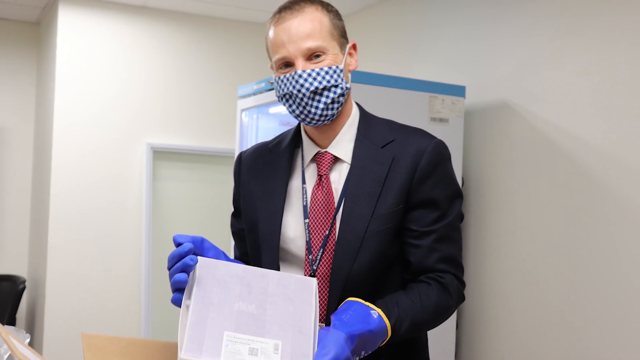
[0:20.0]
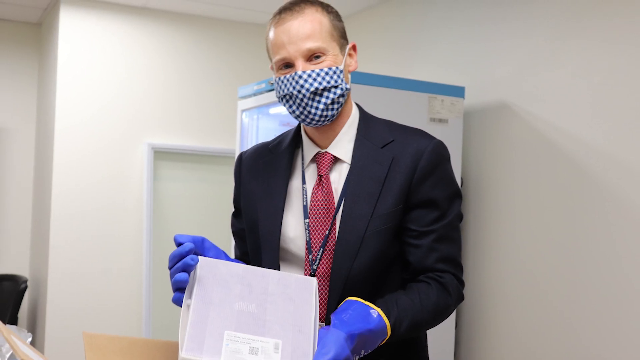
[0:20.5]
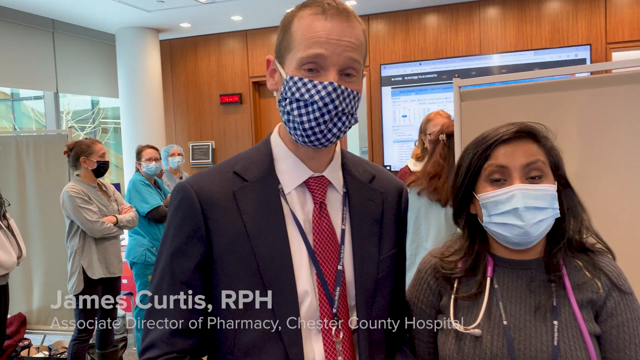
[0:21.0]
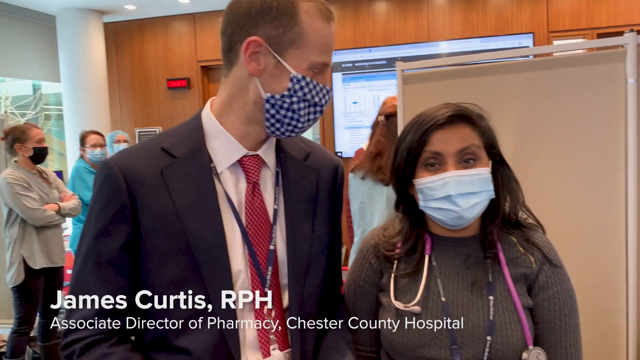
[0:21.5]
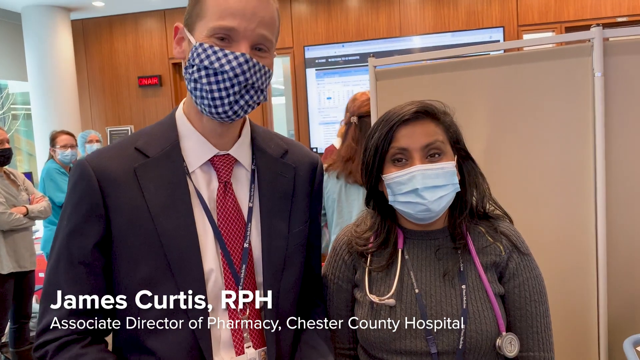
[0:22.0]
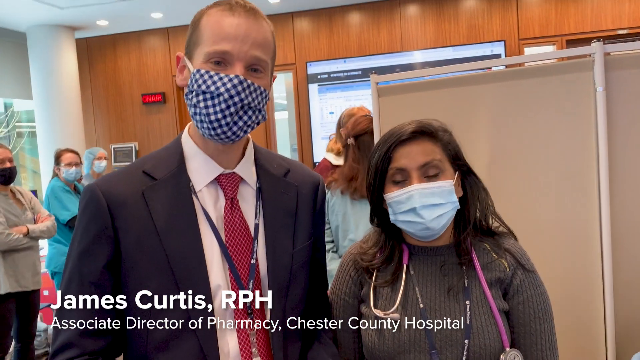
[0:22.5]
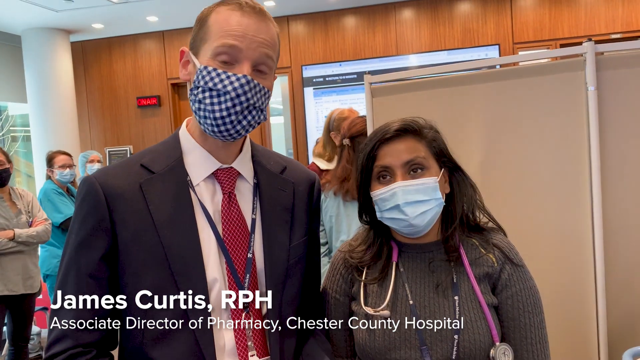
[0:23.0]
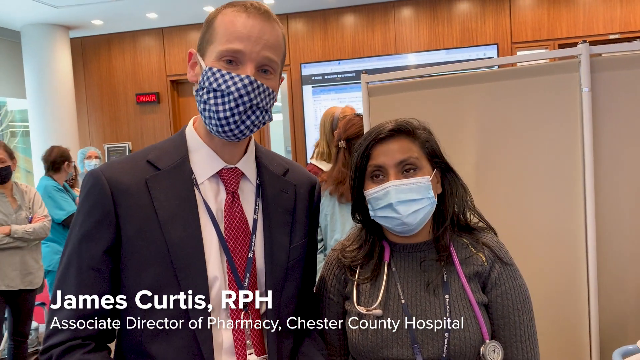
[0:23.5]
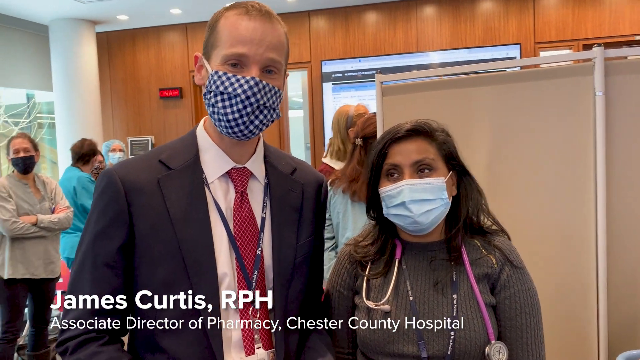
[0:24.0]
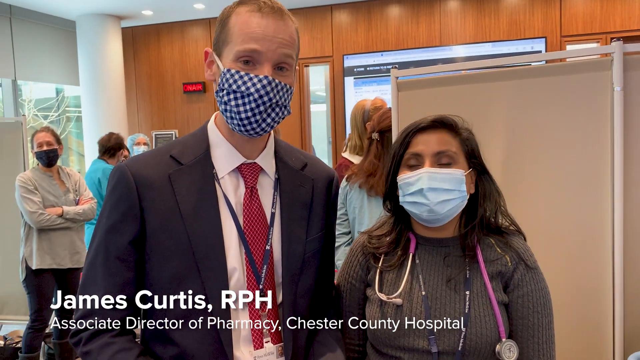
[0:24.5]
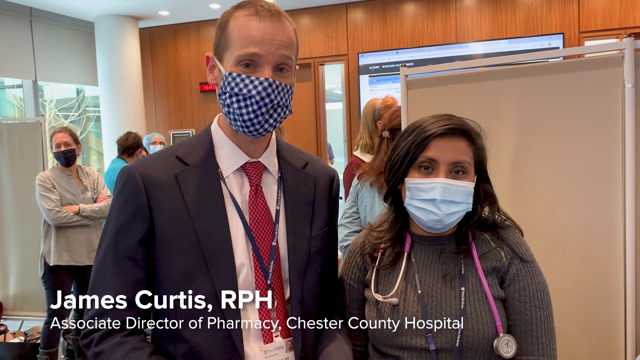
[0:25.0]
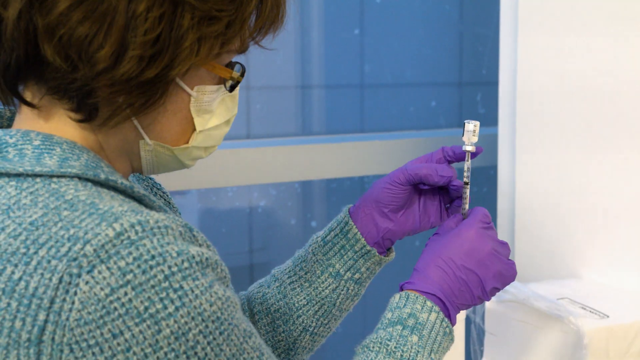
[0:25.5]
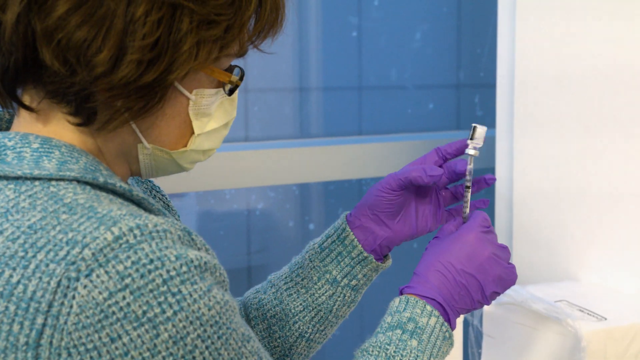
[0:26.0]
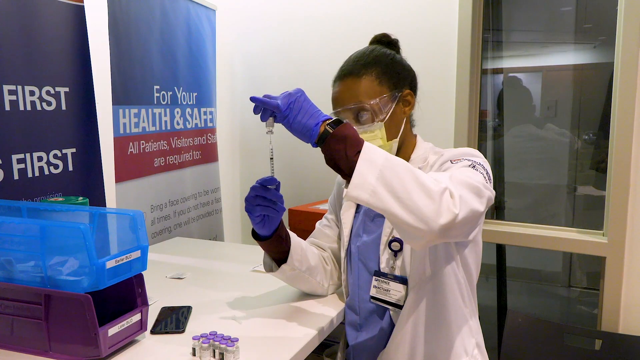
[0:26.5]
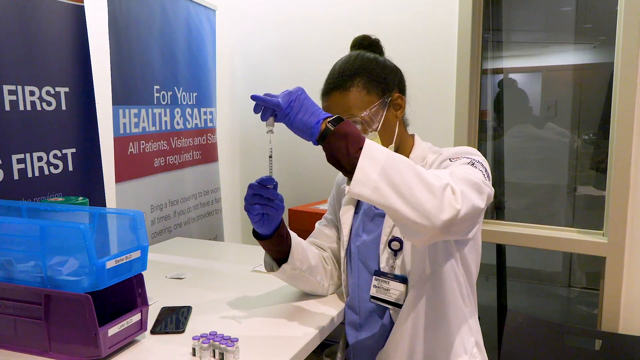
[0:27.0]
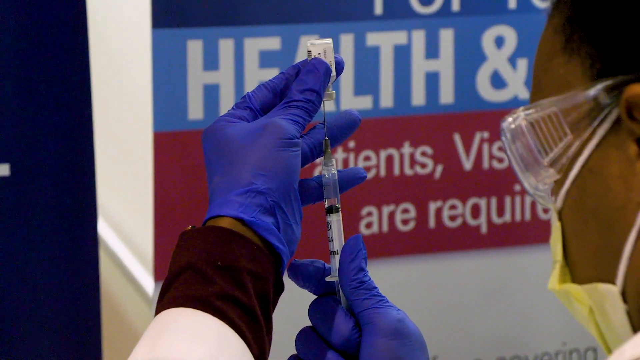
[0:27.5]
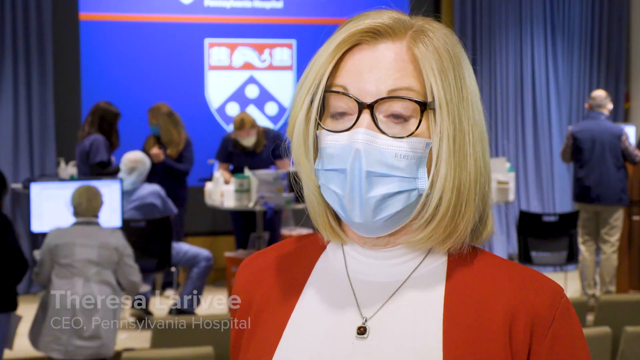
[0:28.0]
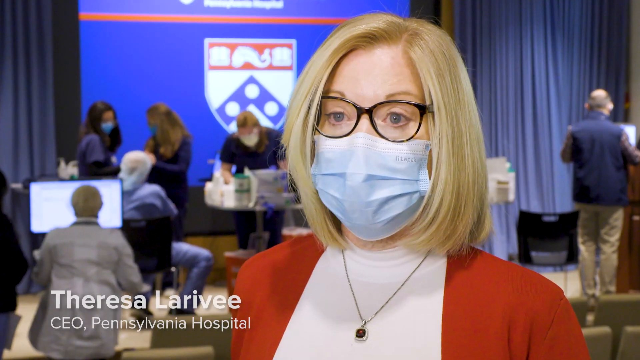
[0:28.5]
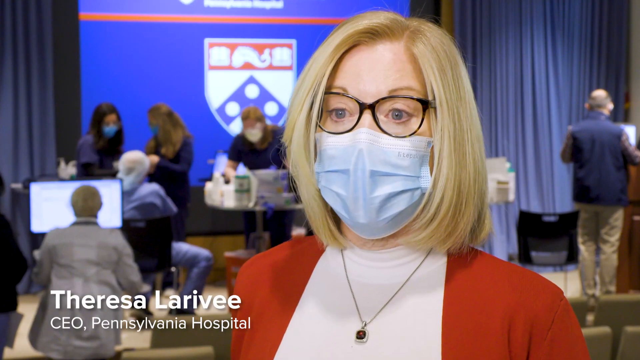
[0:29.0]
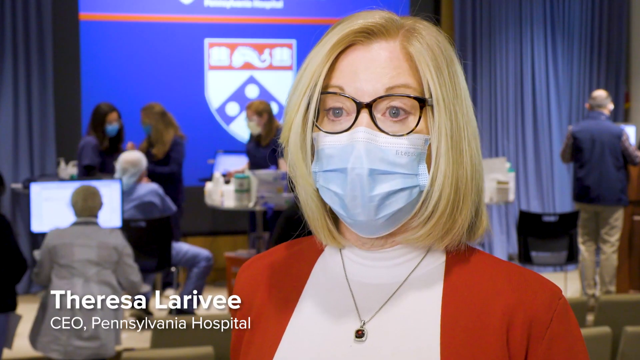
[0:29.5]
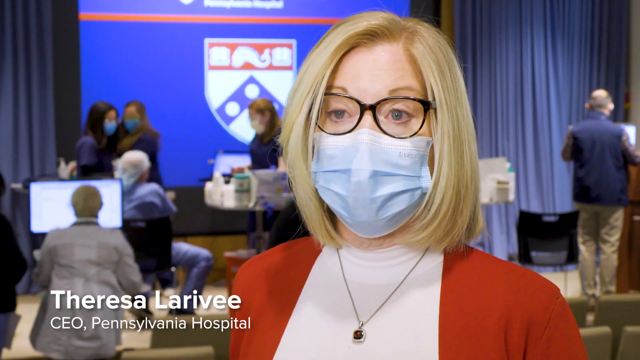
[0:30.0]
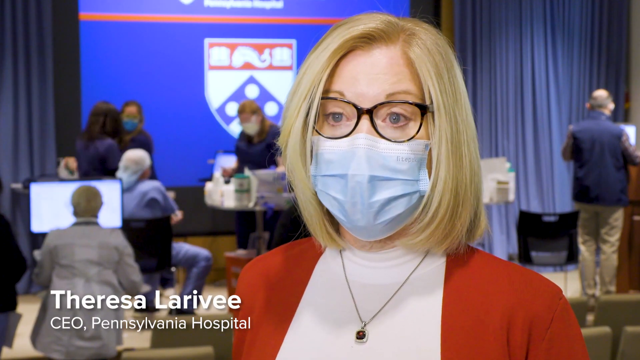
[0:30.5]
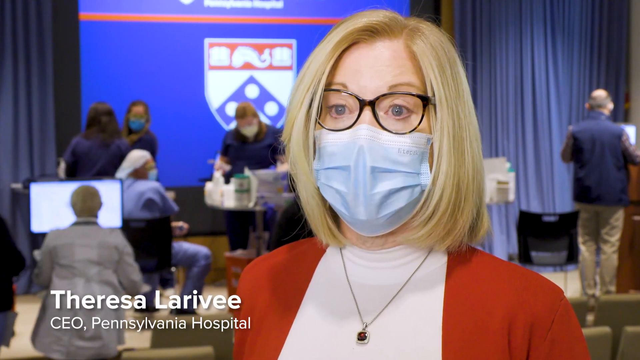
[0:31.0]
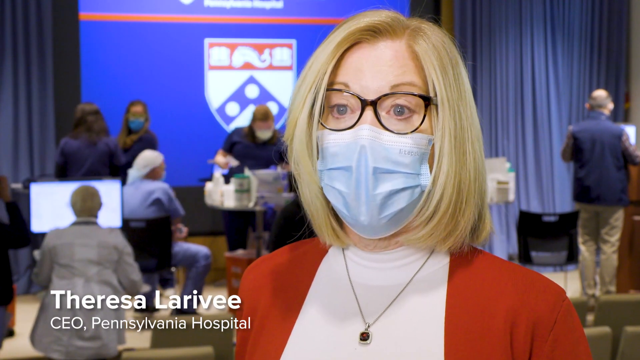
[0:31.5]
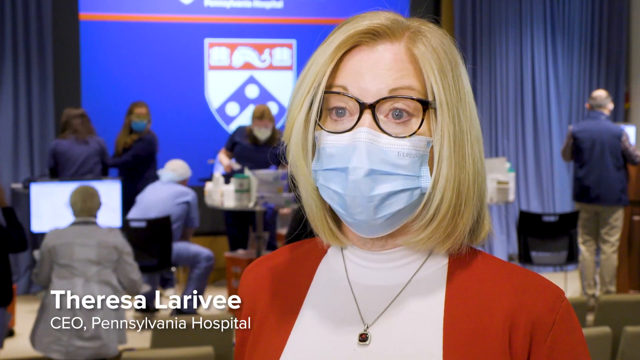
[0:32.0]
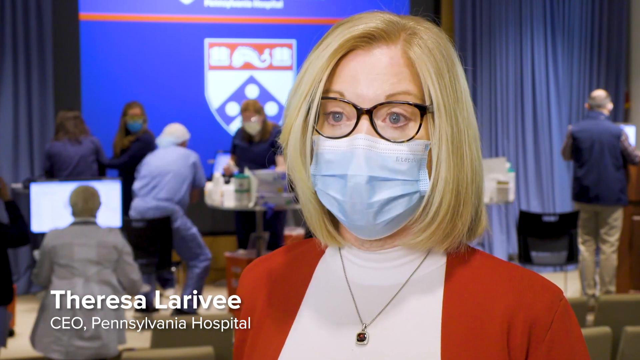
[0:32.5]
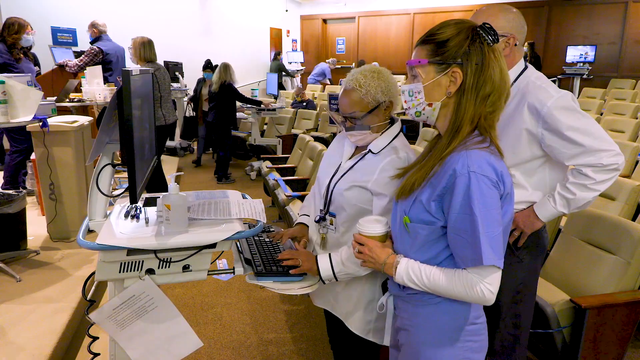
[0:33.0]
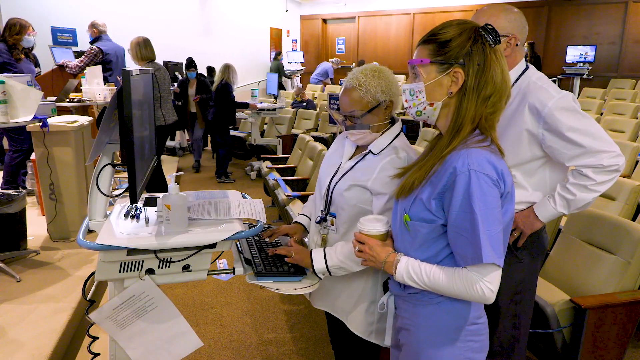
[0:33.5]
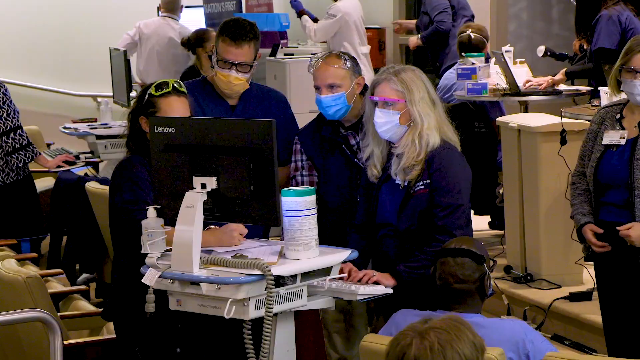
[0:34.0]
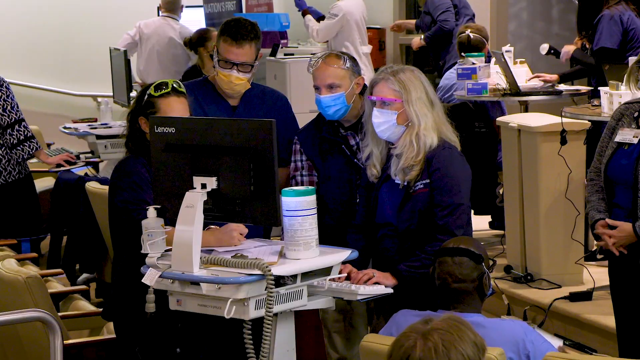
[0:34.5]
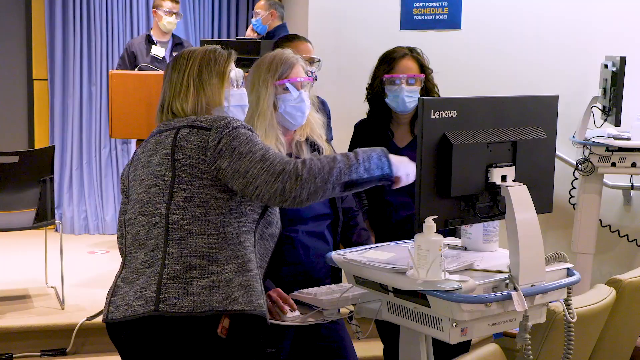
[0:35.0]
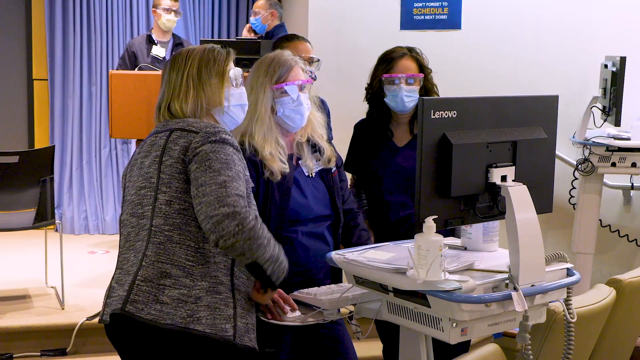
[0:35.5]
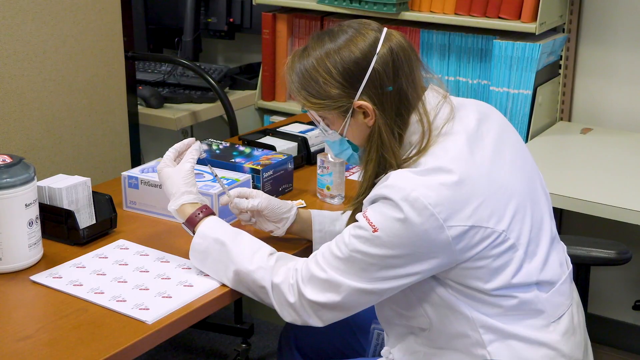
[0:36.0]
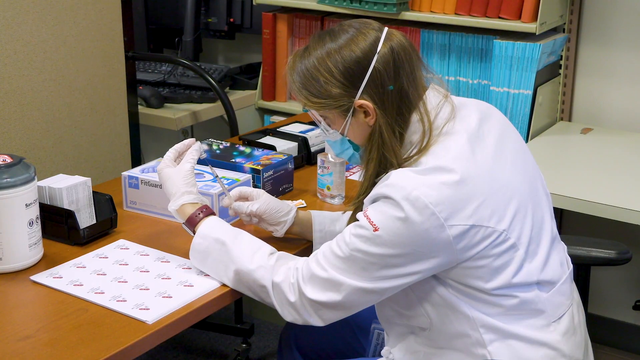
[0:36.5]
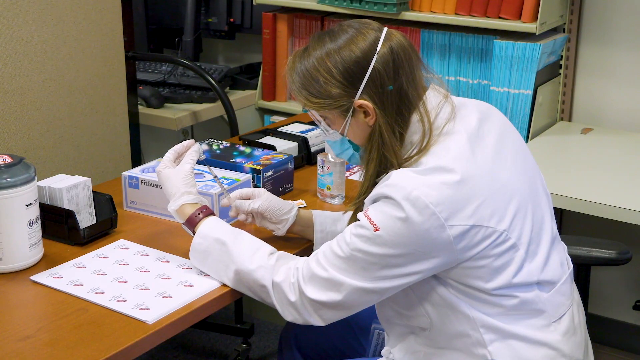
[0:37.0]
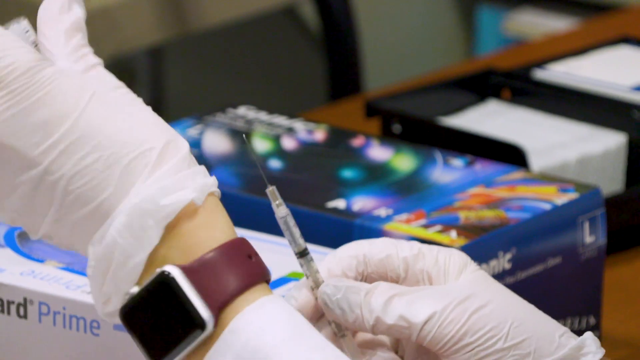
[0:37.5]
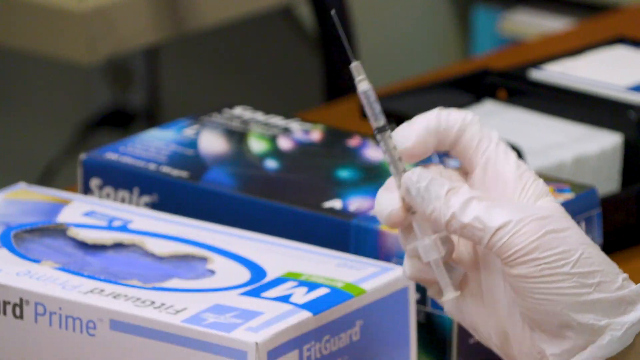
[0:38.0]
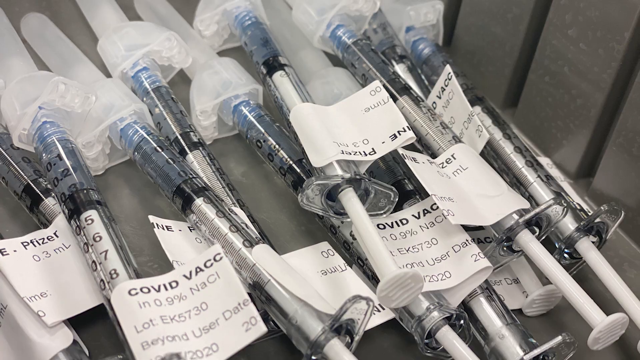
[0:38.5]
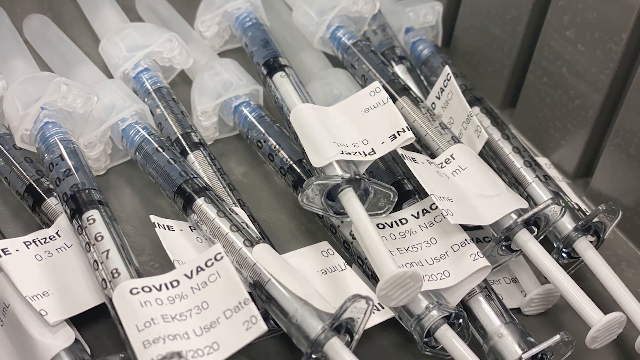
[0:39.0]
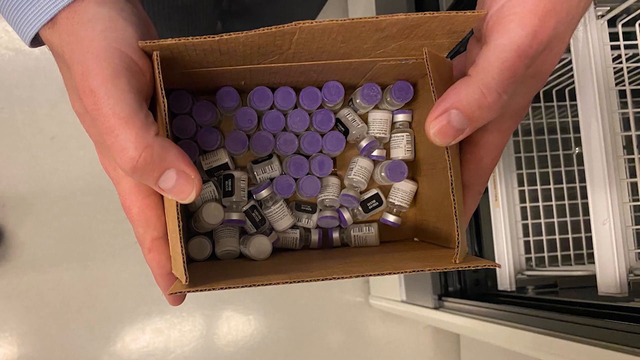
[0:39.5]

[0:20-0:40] A still image shows a man, presumably a doctor, in a face mask covering his nose and face. He wears the same blue gloves as the man who put the box of vaccines in the freezer. The scene cuts to moving footage of this man with a female colleague, also presumably a doctor, who has a stethoscope around her neck and a lanyard, like the male colleague talking with her. A subtitle at the bottom of the screen identifies him as "James Curtis, RPH, Associate Director of Pharmacy, Chester County Hospital". The two talk to the camera as if being interviewed, in a hospital setting, with nurses just in the background, slightly out of view, and a hospital screen covering one of the ward windows. Several medium shots follow of nurses or doctors flicking the end of a hypodermic needle to rid it of any air bubbles. Next comes a head-and-shoulders shot of a woman with a bob cut, wearing glasses and a mask covering her nose and face: Teresa Larivie, CEO of Pennsylvania Hospital. She talks to the camera, apparently answering questions.